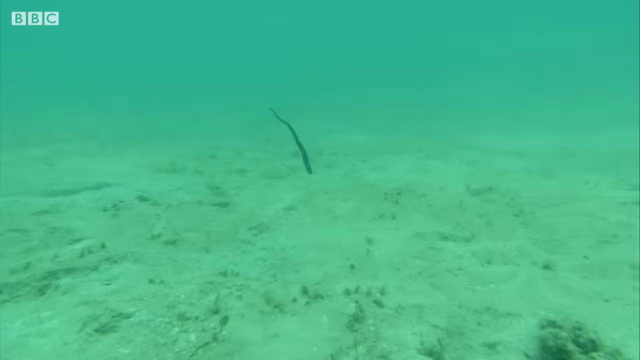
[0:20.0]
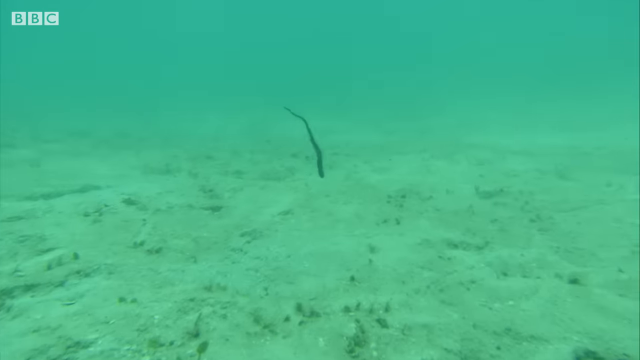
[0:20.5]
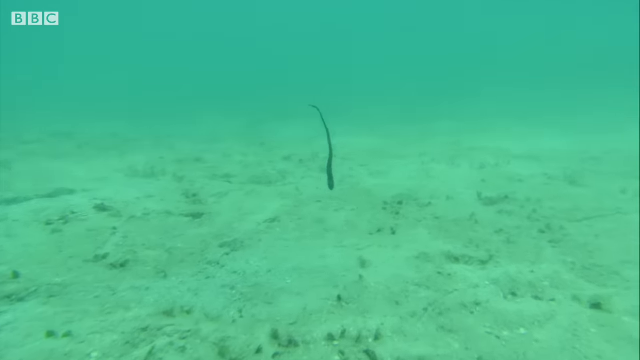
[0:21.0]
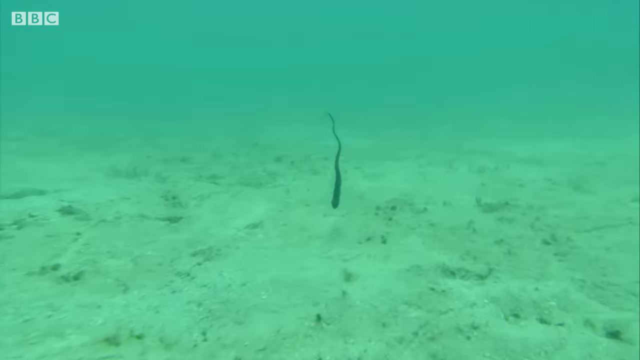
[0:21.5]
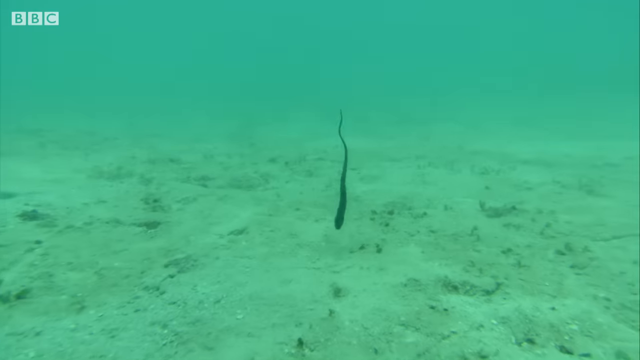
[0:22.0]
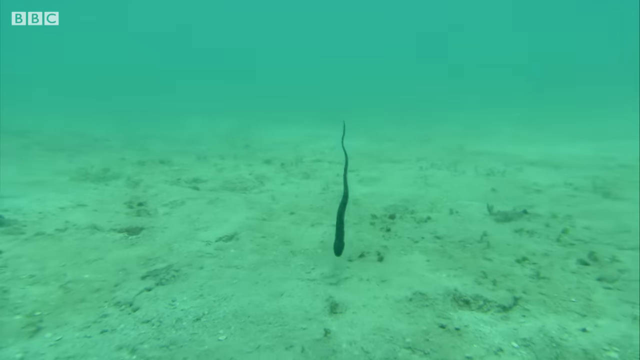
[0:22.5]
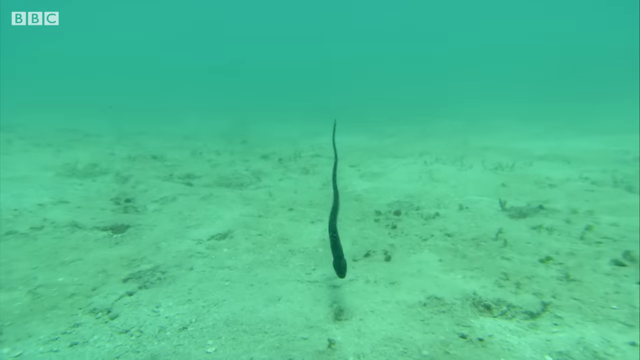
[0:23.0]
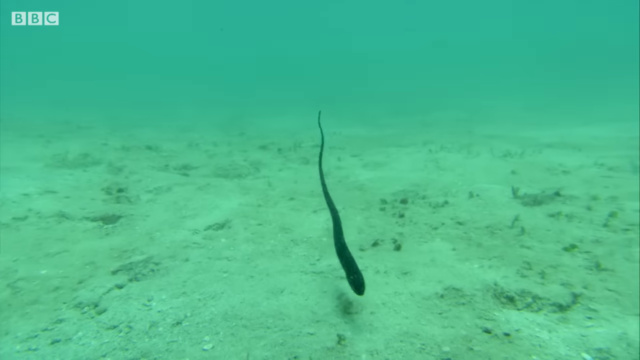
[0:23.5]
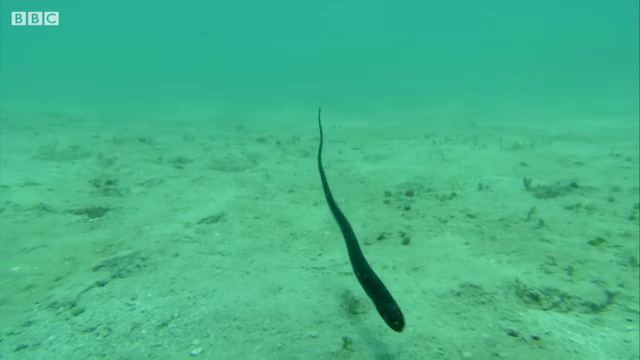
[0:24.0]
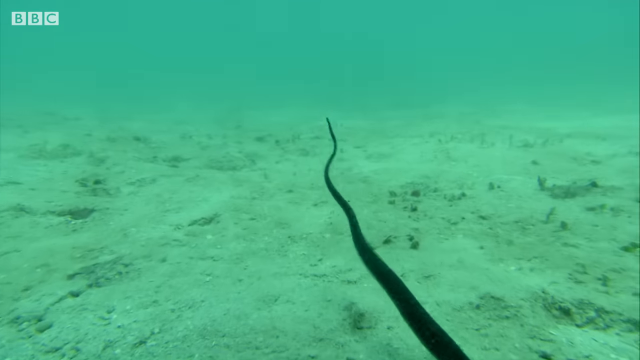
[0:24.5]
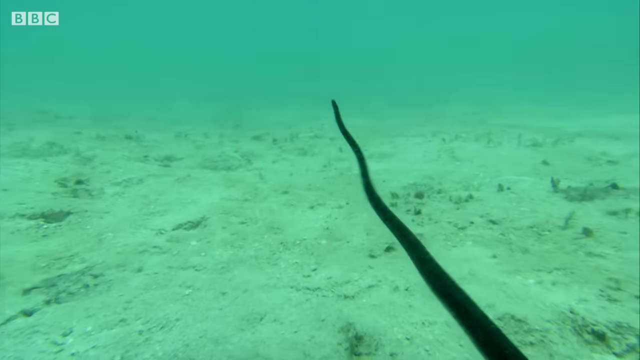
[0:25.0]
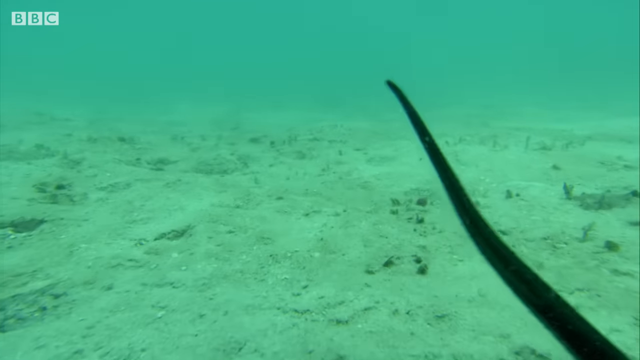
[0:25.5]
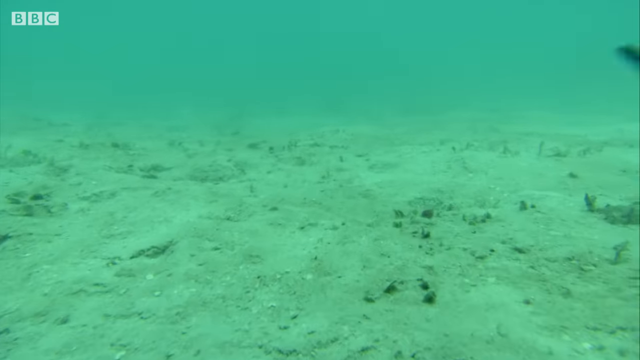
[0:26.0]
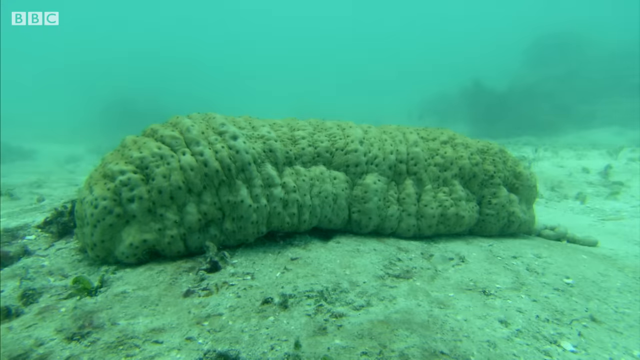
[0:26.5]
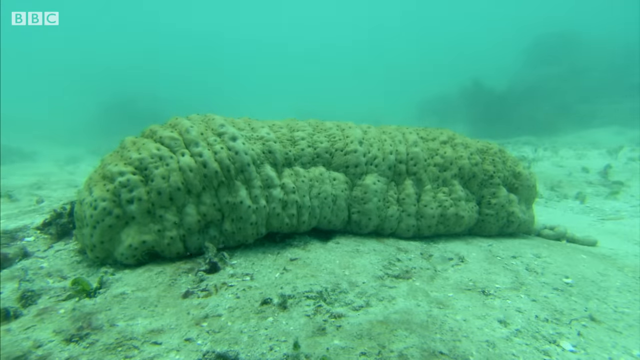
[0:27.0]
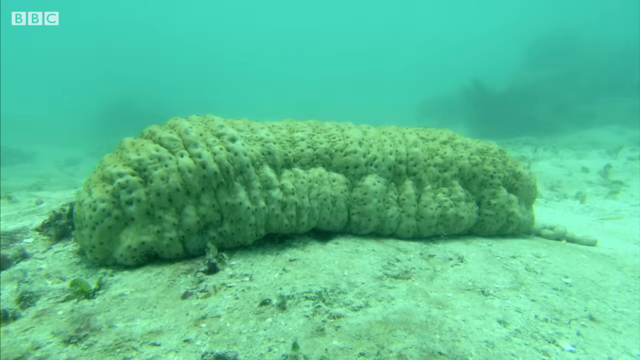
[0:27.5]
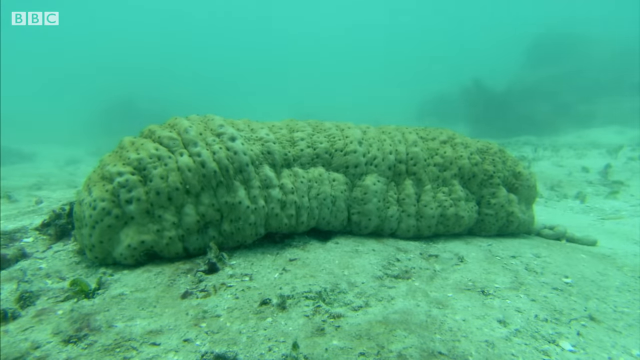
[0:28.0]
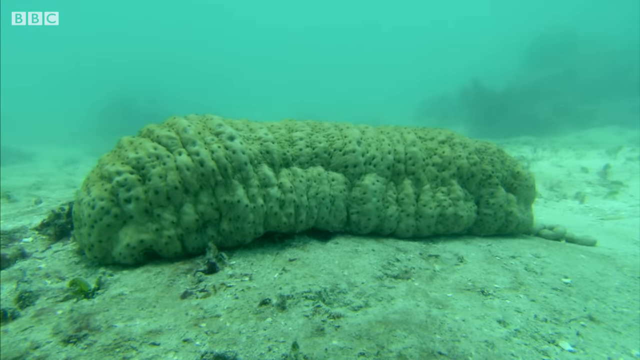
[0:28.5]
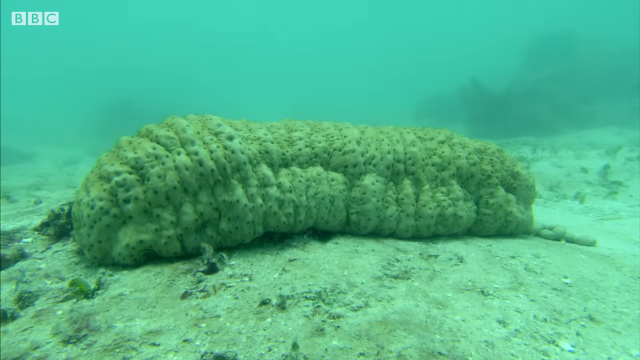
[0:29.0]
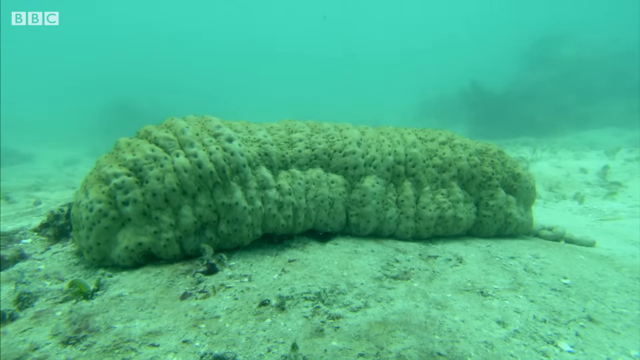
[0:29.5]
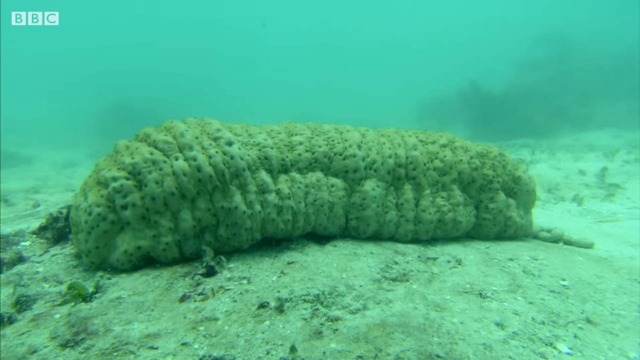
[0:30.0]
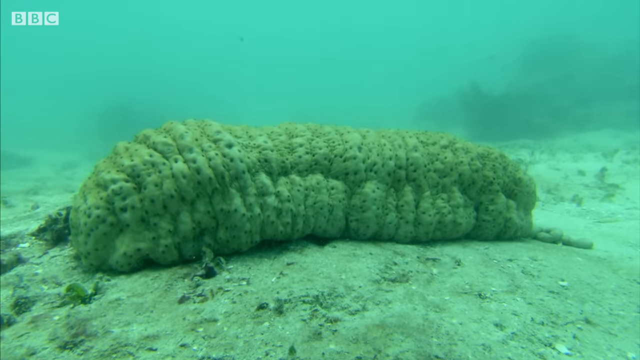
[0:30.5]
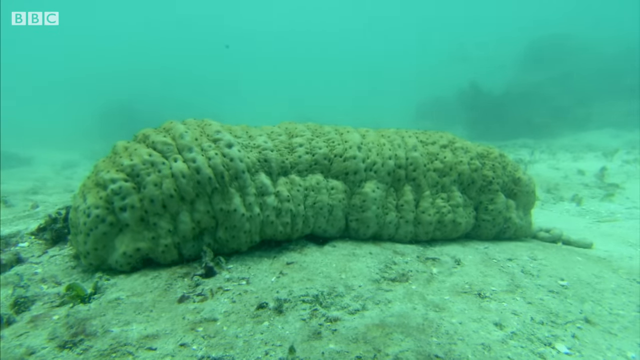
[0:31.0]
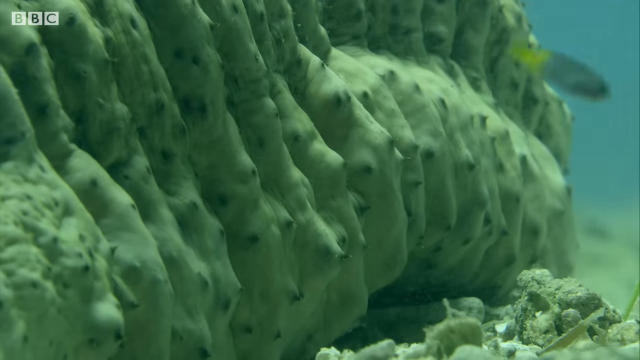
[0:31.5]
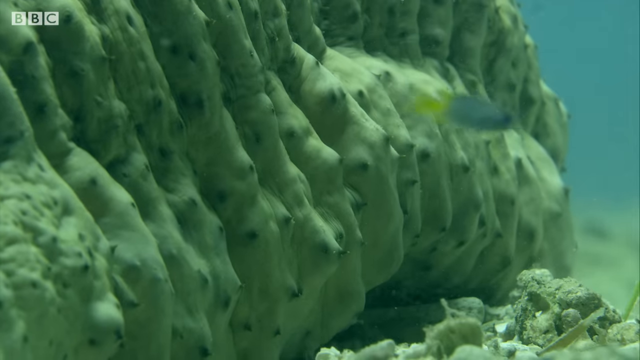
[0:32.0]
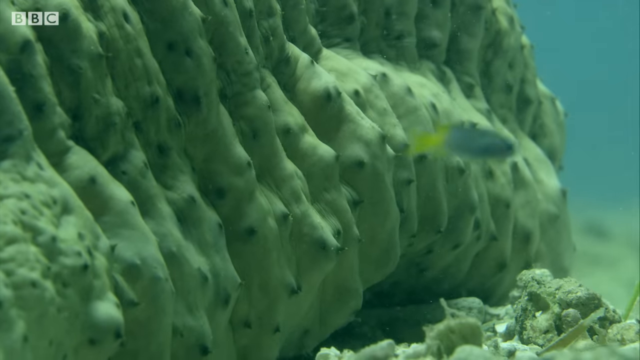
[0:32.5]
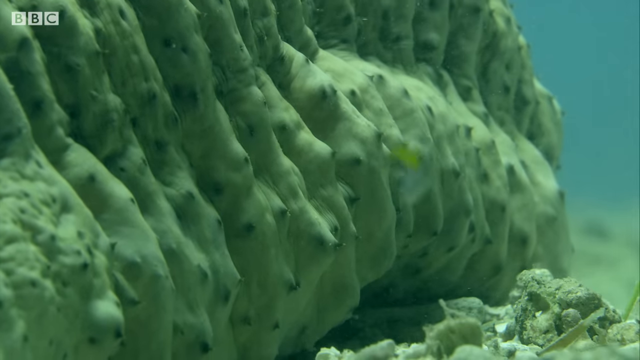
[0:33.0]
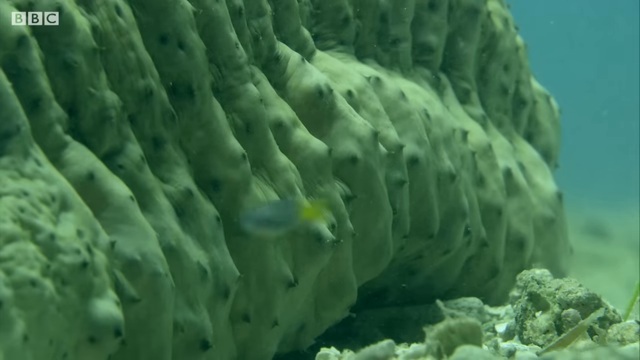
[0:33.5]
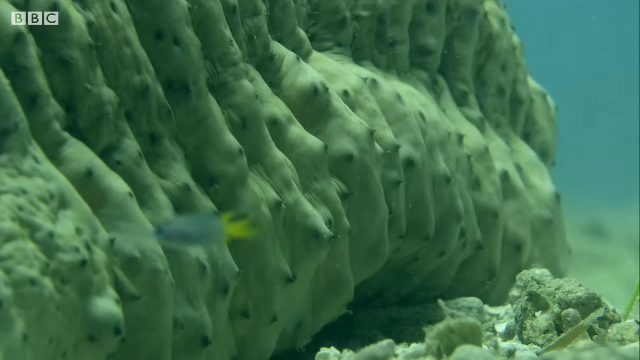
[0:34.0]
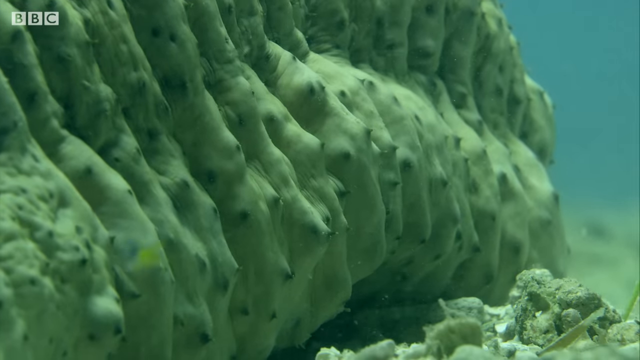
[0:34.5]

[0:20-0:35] The pear fish continues along the bottom of the water, moving somewhat more, and comes across other ocean life. Some type of animal appears to be breathing, its body moving up and down almost visibly, and it almost looks as if it has an eye. A blue and yellow fish is by this animal, moving around it. The eel is not in the same frame as the animal; the shot shows the animal on its own, and the eel and the animal are not seen together.